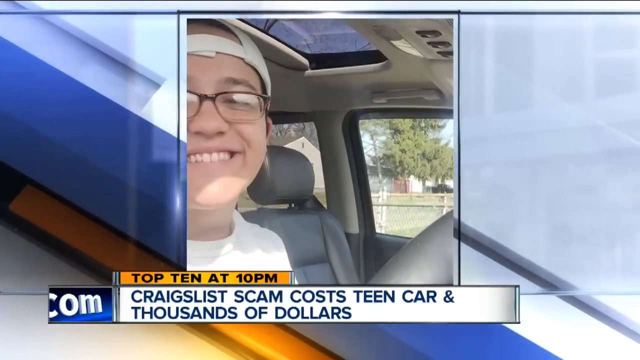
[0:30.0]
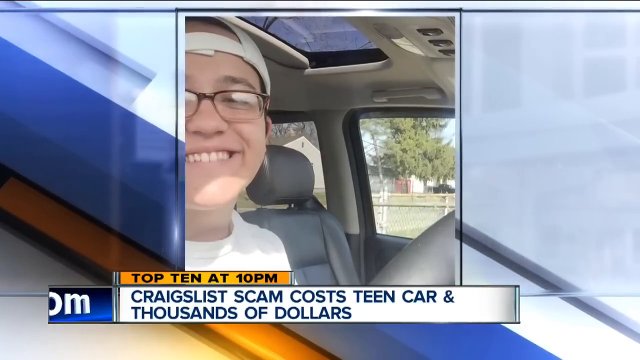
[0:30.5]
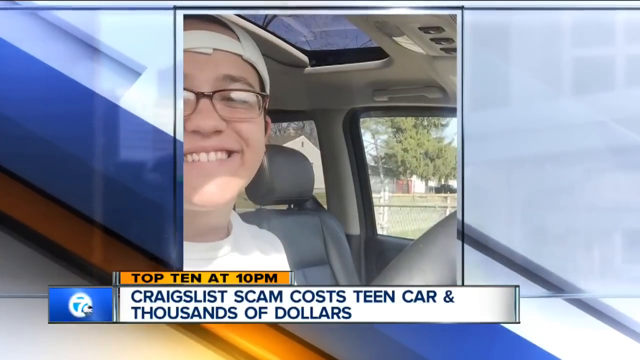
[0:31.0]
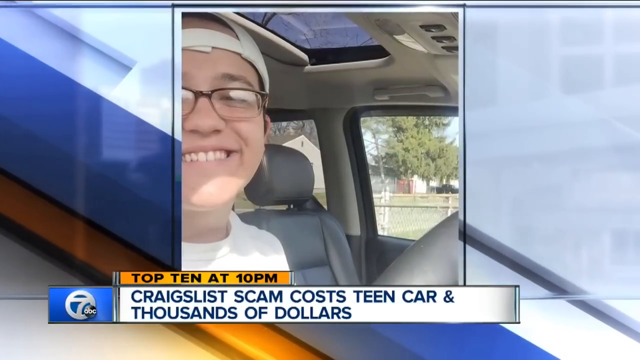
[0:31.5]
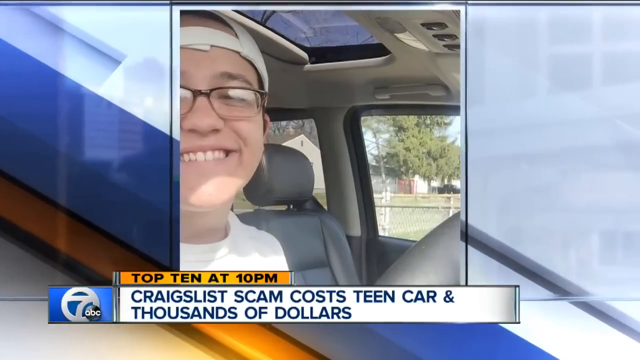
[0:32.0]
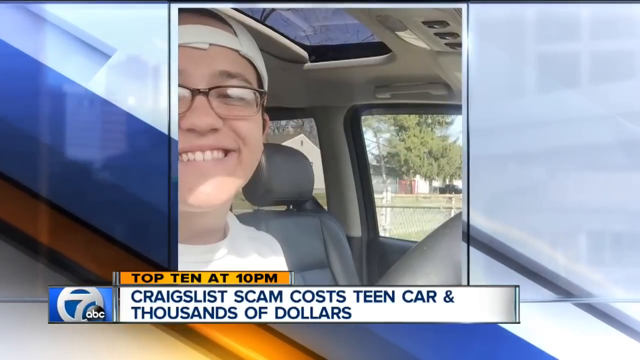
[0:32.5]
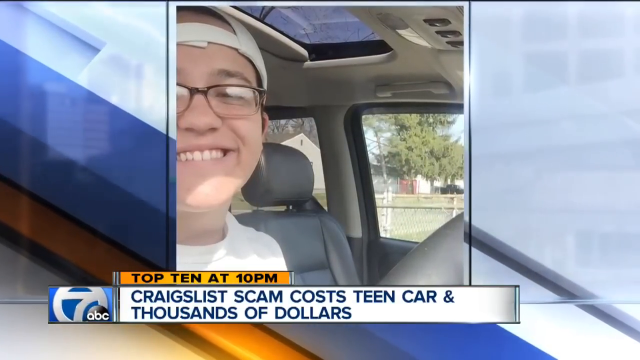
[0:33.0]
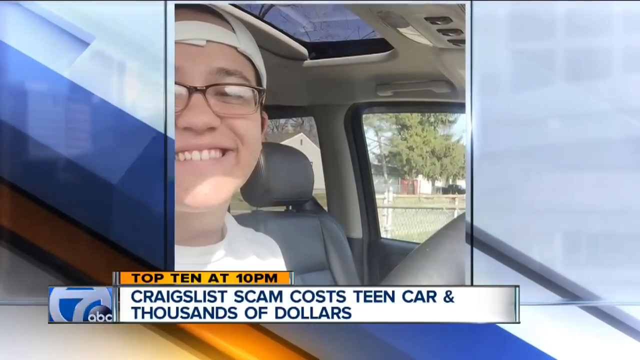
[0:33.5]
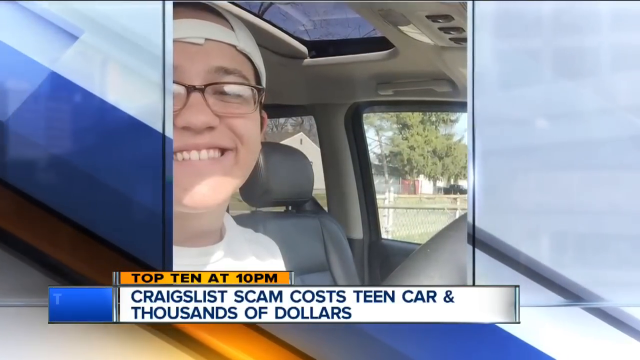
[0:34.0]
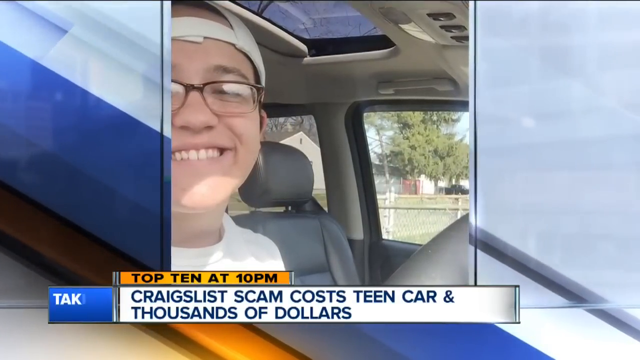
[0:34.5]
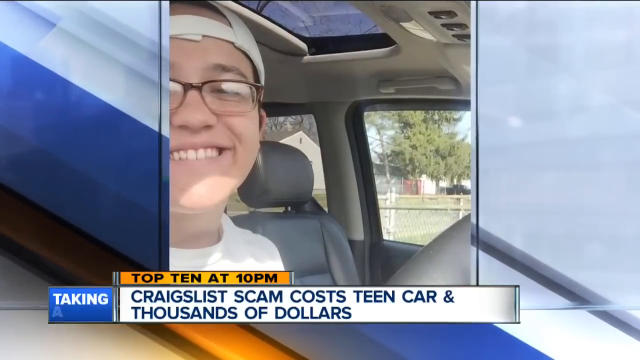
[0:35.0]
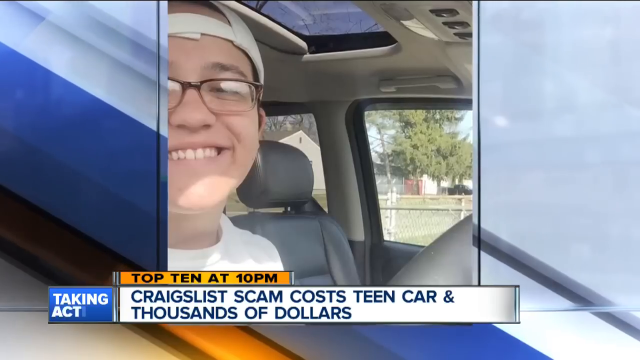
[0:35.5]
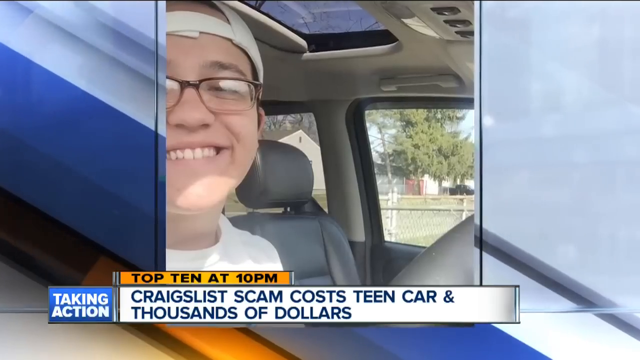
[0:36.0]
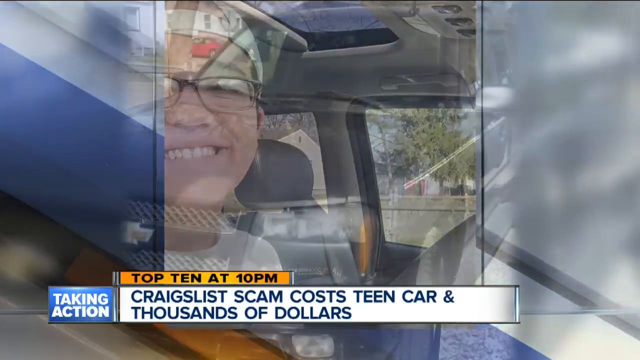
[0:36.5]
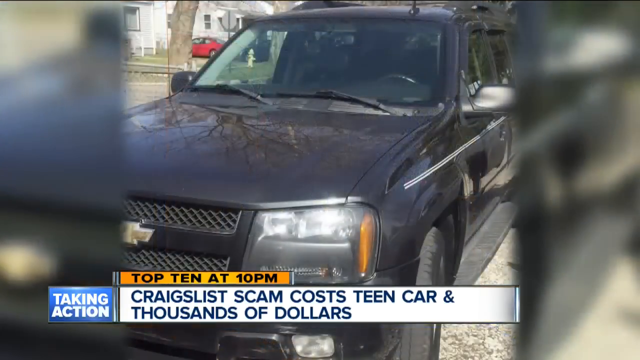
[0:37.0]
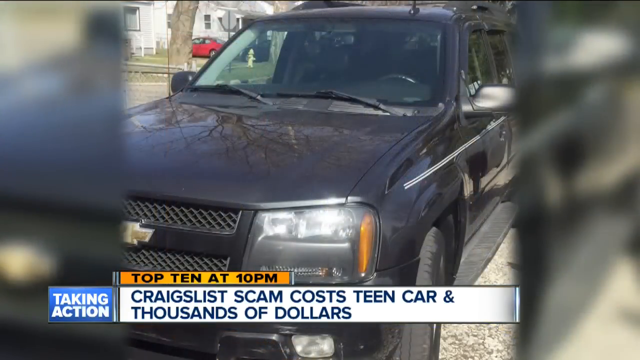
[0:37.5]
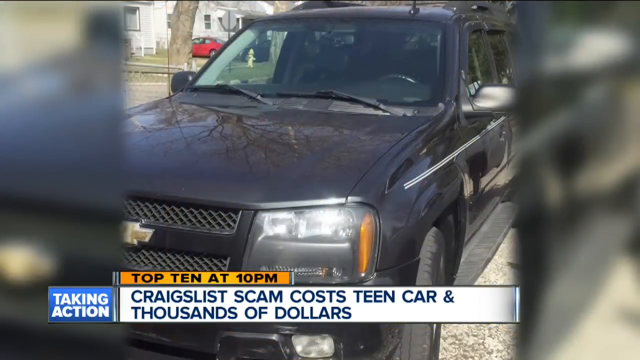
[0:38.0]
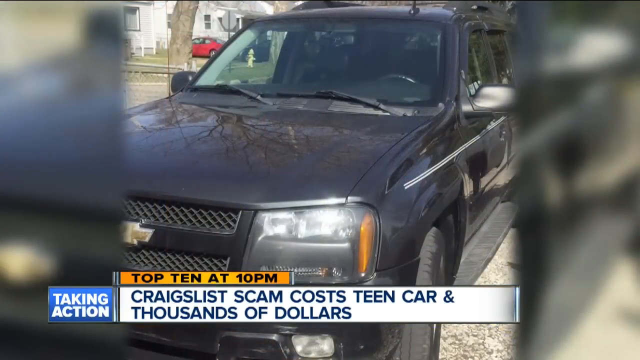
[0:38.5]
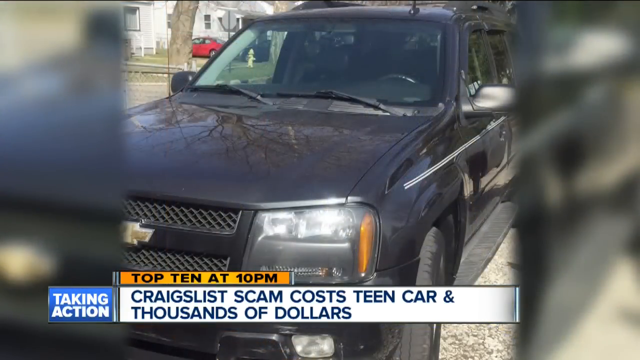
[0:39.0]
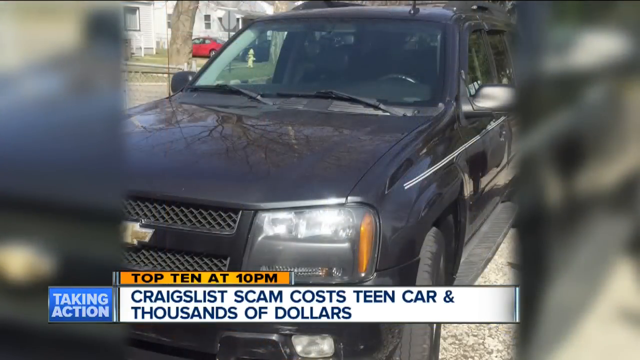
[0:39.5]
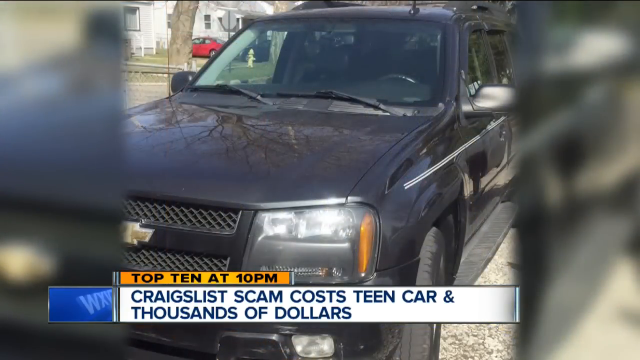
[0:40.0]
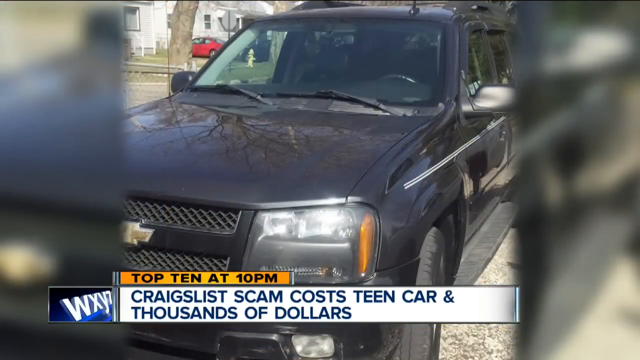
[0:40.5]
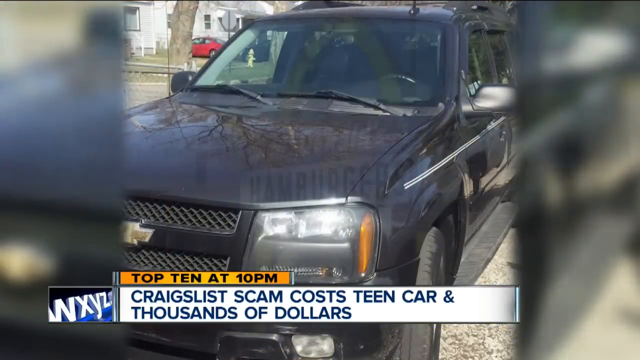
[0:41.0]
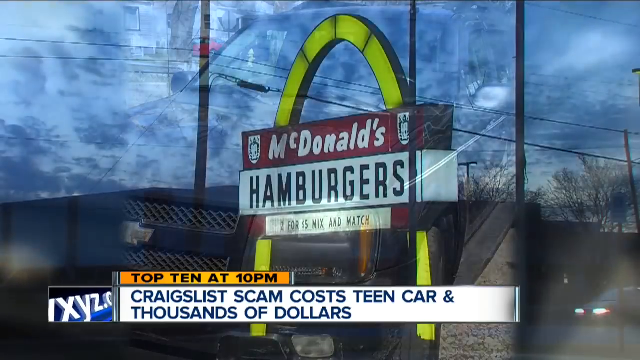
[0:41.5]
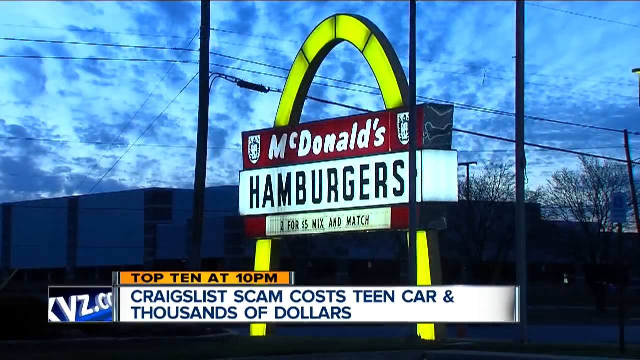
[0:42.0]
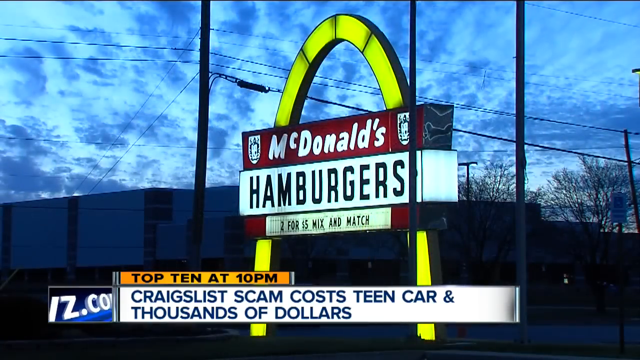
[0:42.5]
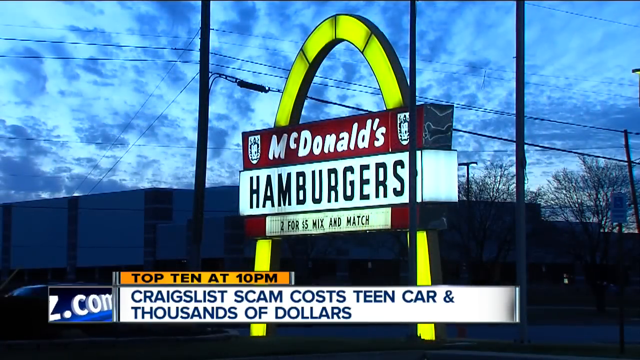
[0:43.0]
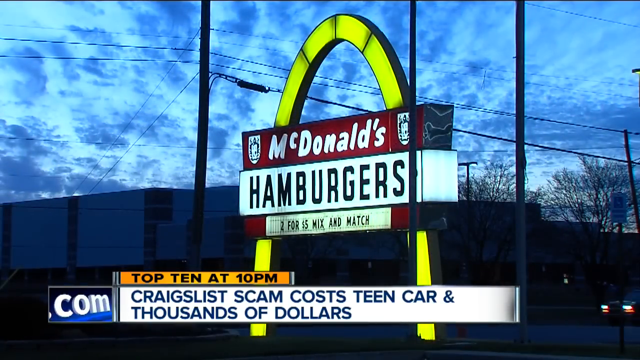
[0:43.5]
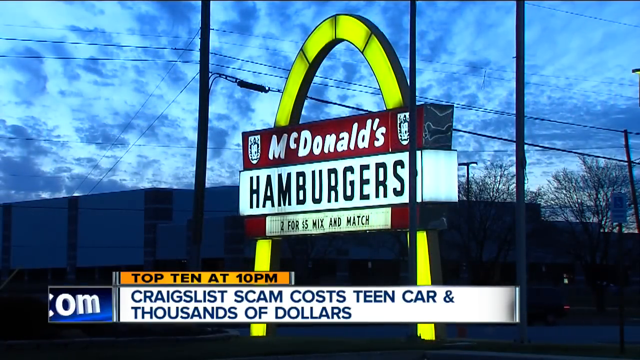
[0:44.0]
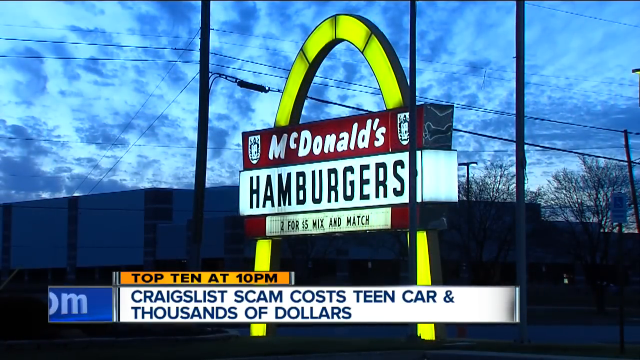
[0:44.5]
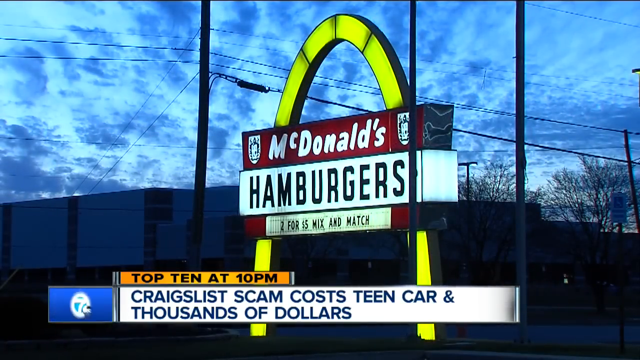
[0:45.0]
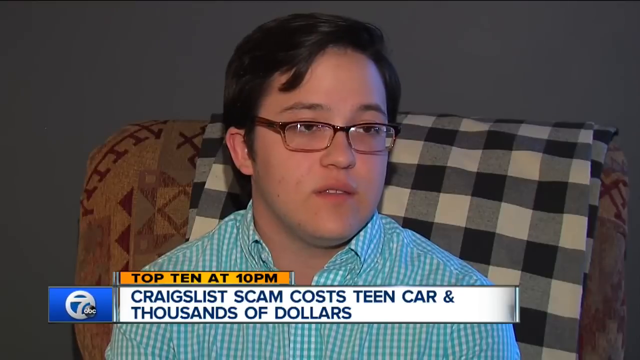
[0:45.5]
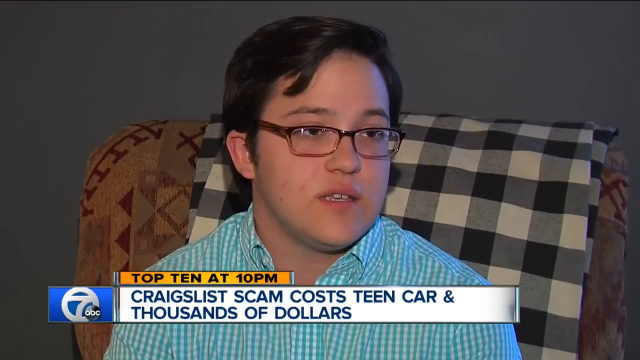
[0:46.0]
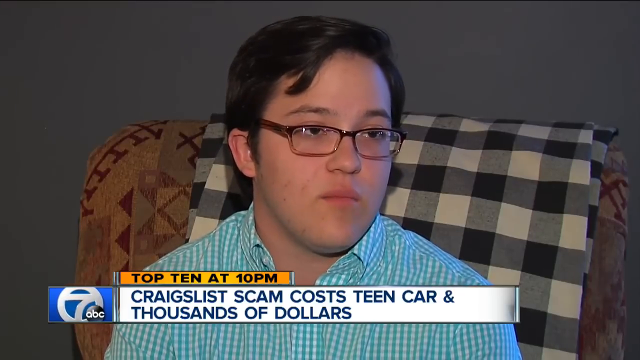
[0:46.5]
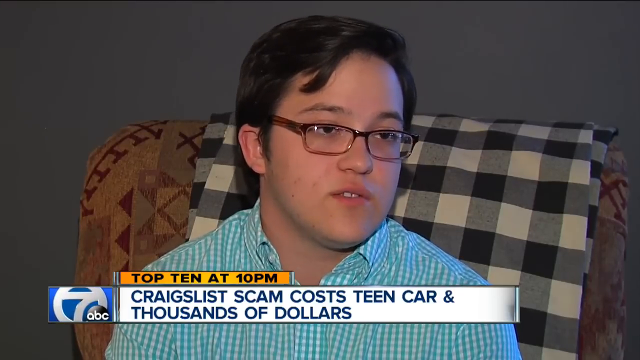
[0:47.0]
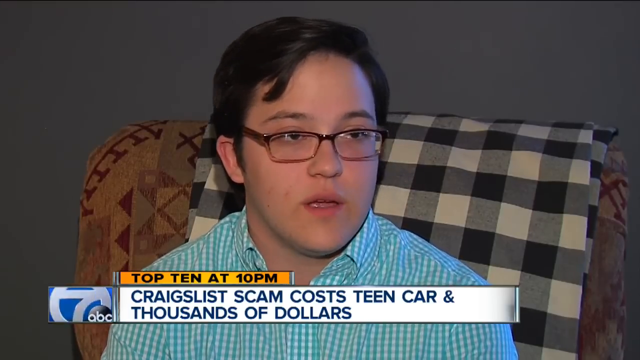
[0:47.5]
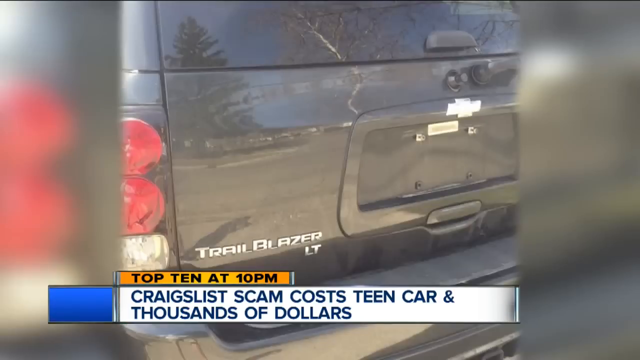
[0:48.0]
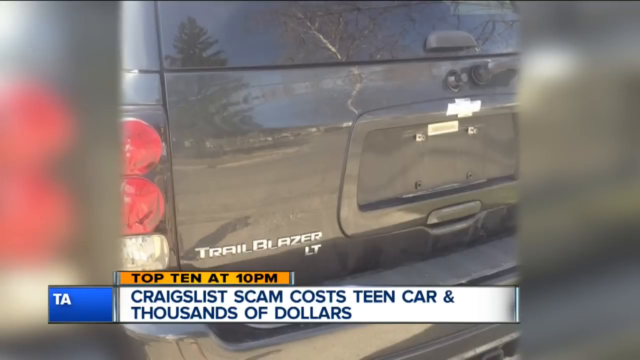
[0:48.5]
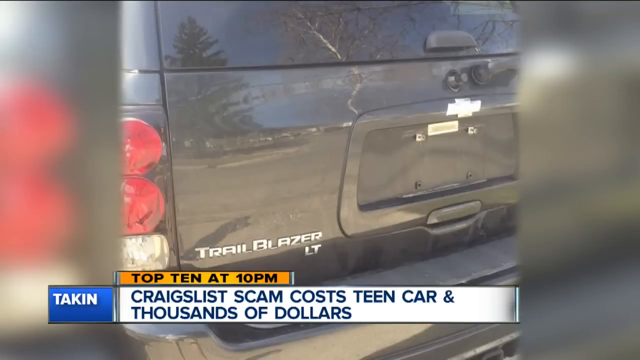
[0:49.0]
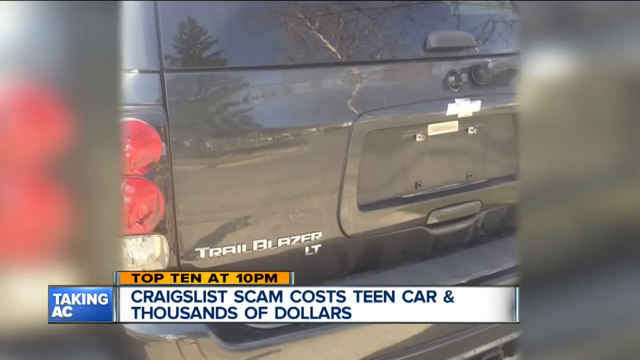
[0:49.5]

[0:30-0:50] The teen appears to be sitting in an SUV with a sunroof and leather seats. He wears glasses and a backward hat and has a big smile. Text reads "top 10 at 10 p.m. Craigslist scam cost teen car and thousands of dollars," with a small "taking action" label next to it. A black SUV that appears to have a Chevy sign on it is shown with no one inside. Next is a McDonald's with a single arch and a sign reading "McDonald's hamburgers," plus a marquee reading "two for five dollars mix-and-match," with cars driving by. The teen then appears in front of a rocking chair covered with a gingham blanket; he wears a turquoise and brown gingham shirt and sunglasses and looks to be talking to someone just off camera. The view returns to the rear of the SUV, which has no license plate and reads "trailblazer LT."